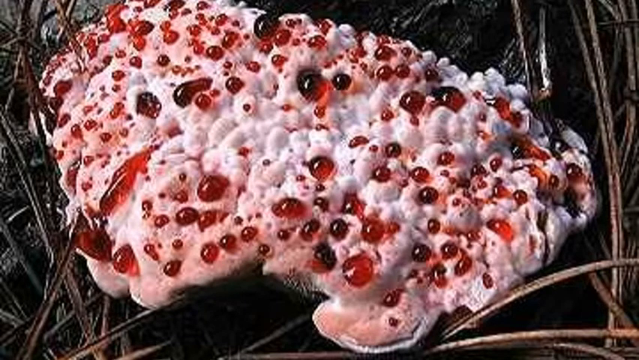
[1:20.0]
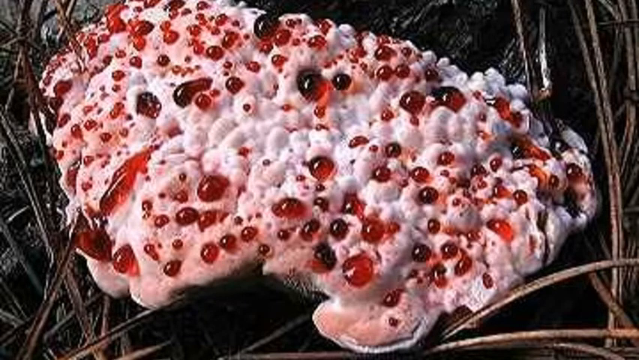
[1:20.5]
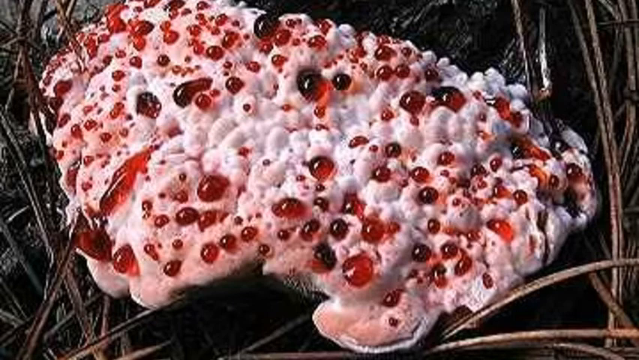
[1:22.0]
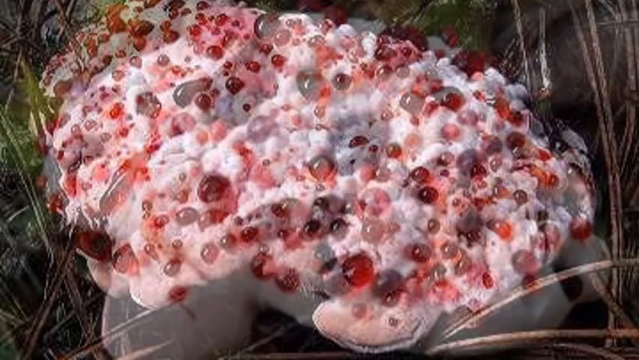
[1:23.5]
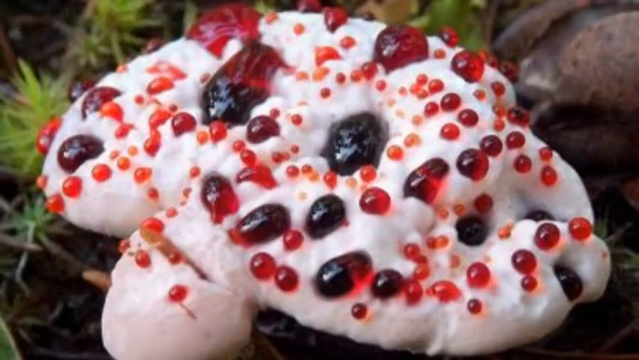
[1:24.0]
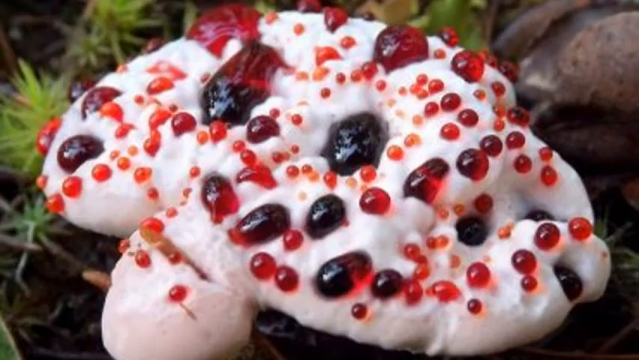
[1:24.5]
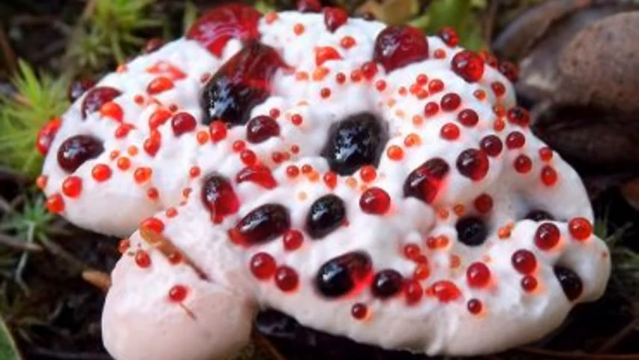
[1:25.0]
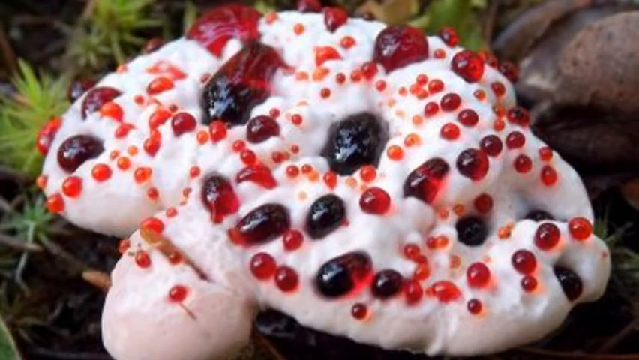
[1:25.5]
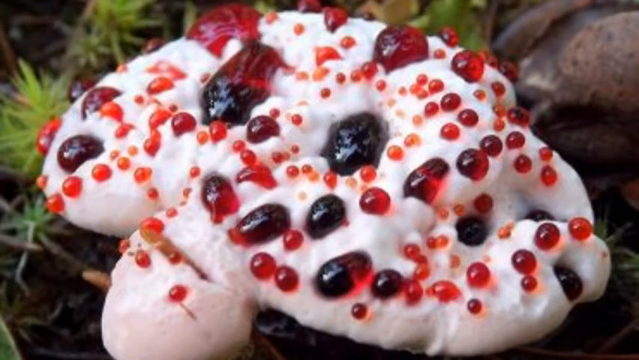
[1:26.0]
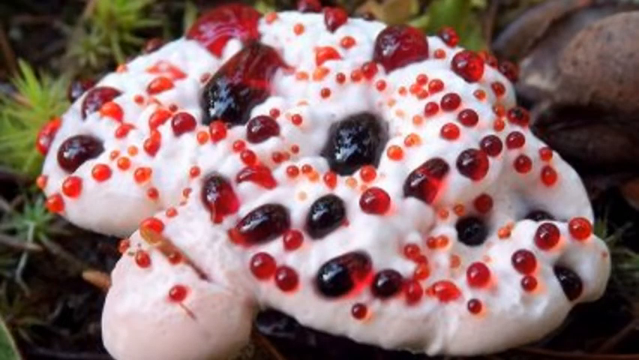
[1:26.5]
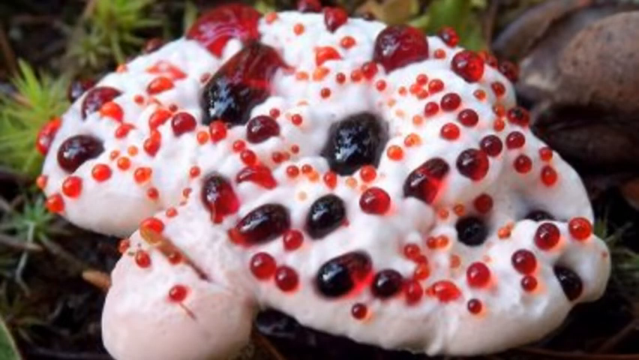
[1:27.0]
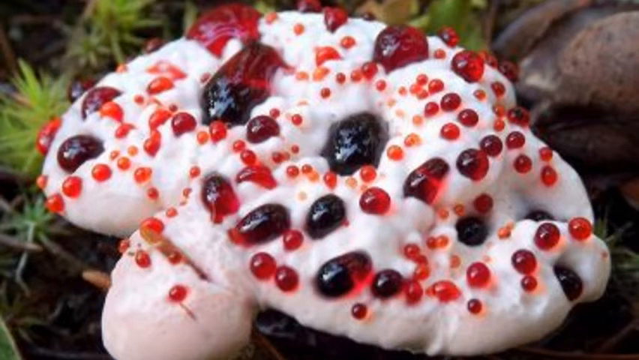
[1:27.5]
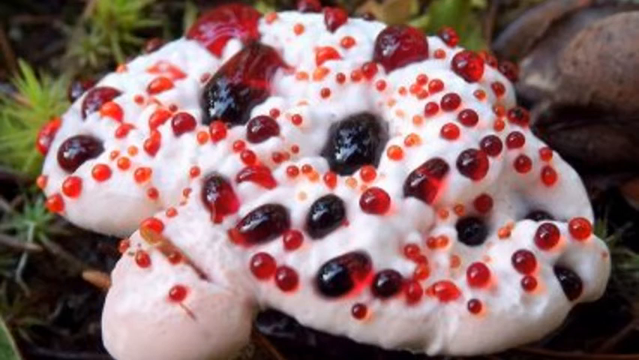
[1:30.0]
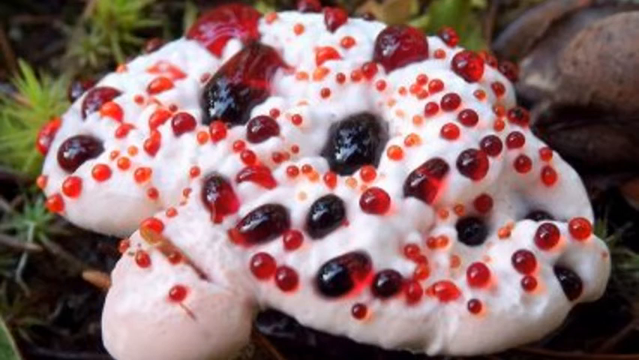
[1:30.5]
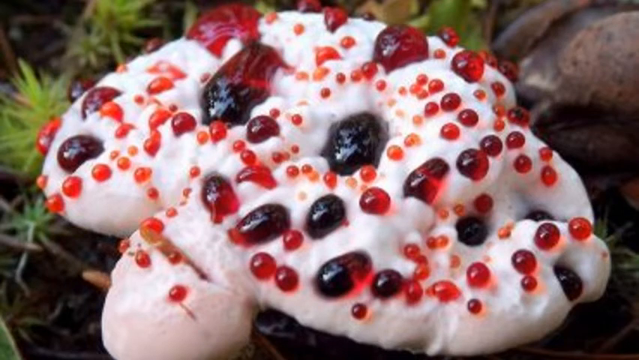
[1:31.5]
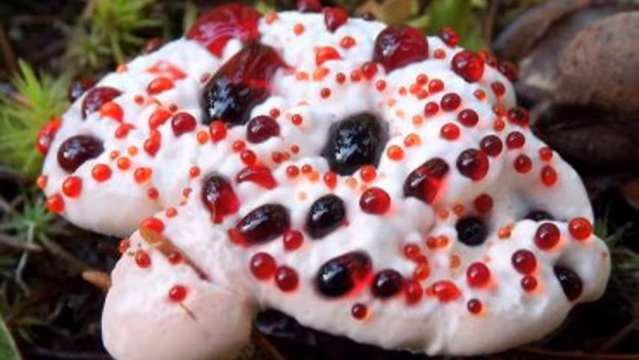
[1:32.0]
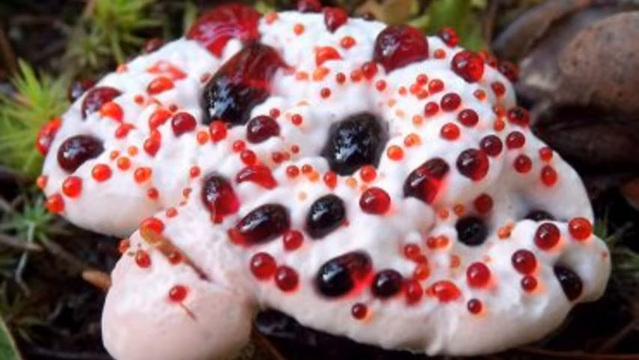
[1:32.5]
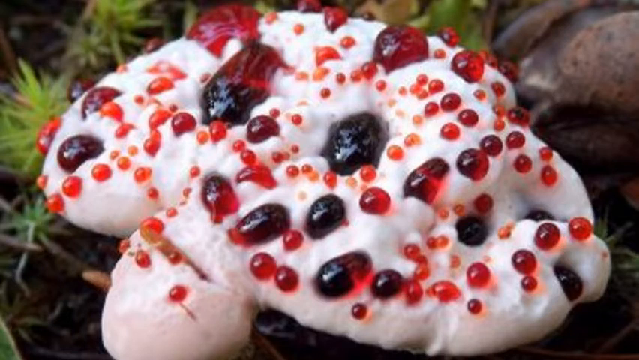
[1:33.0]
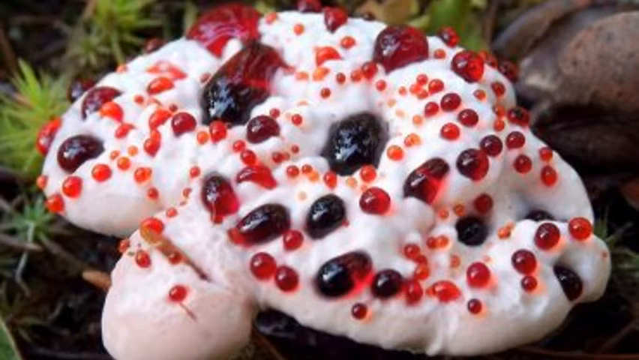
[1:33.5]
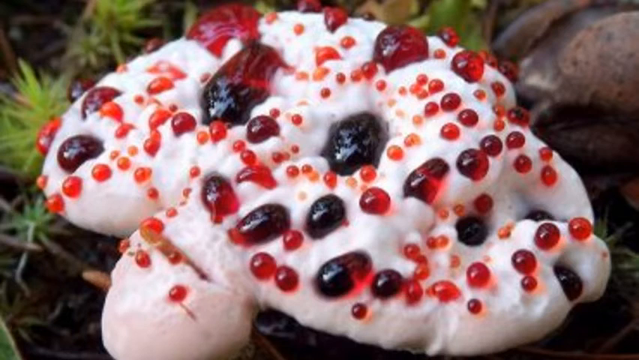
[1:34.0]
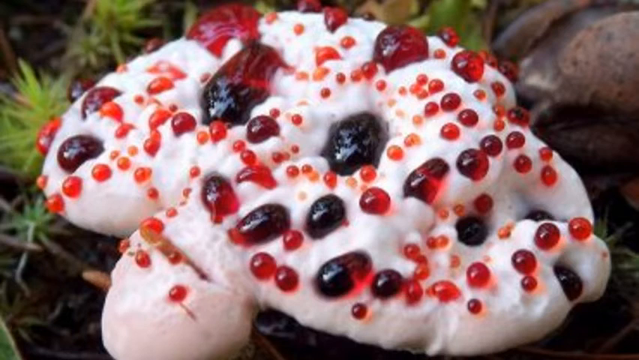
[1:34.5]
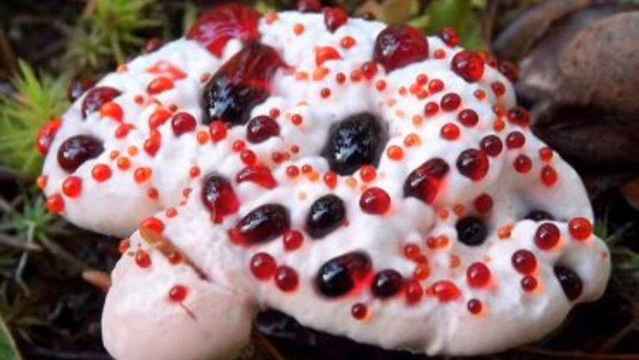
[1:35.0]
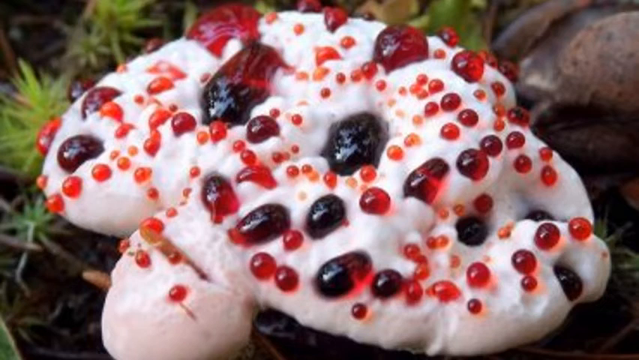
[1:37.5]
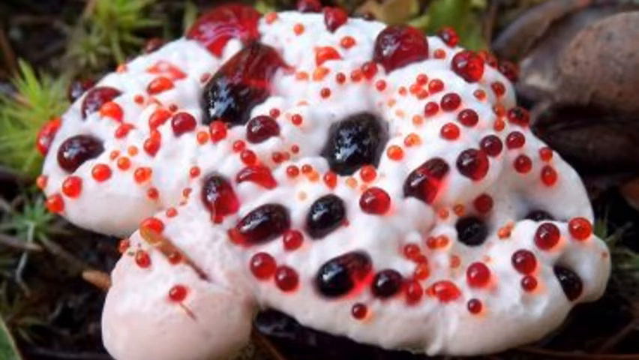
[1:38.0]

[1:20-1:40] Another example of the fungus is extremely large in size, with extremely large red blobs of liquid attached to its white surface head. Some of the larger blobs are a very deep, dark red that appears almost black, and the larger a blob of liquid is, the darker red it appears, while some of the smaller blobs appear a lighter shade of red. Lots of vegetation grows around the fungus, with lots of twigs in the forest setting and some wild grass in the background. Some bubbling is visible on the head of one of the fungi, possibly caused by the red liquid blobs.